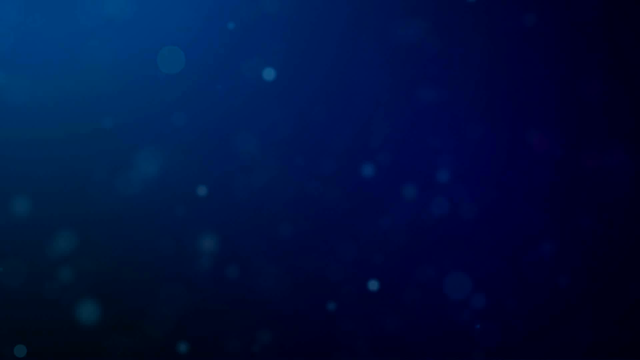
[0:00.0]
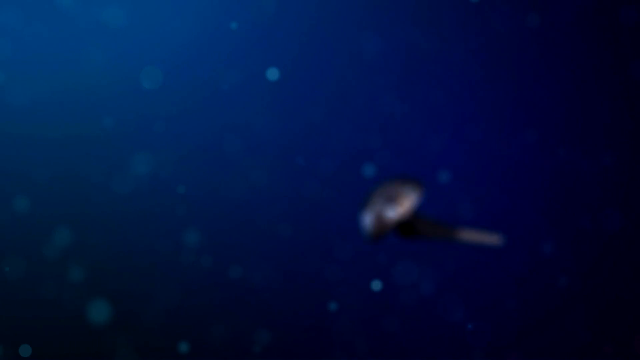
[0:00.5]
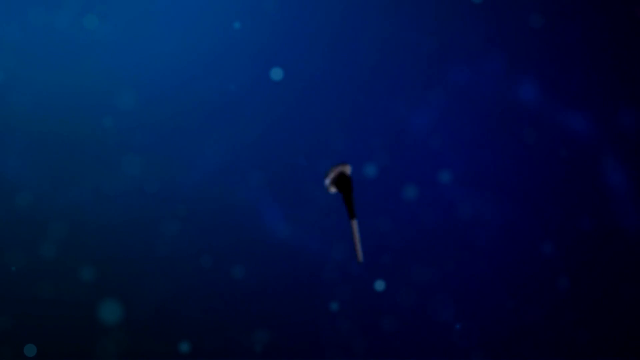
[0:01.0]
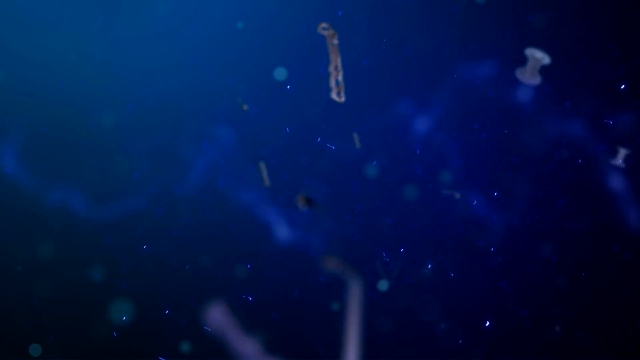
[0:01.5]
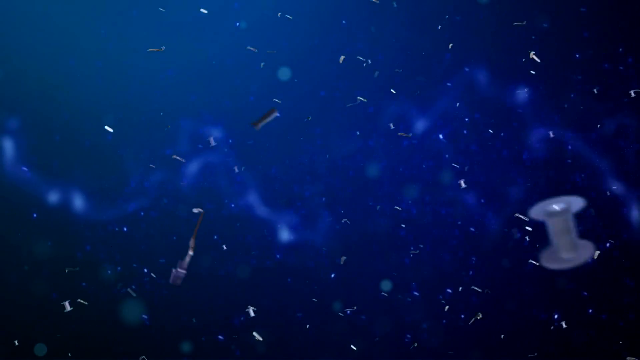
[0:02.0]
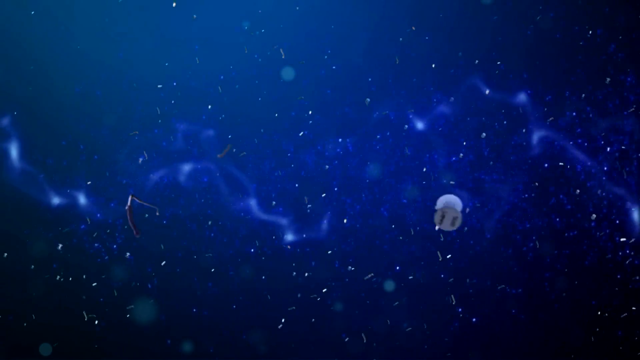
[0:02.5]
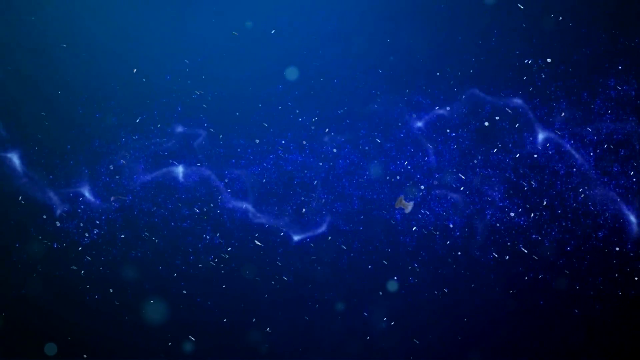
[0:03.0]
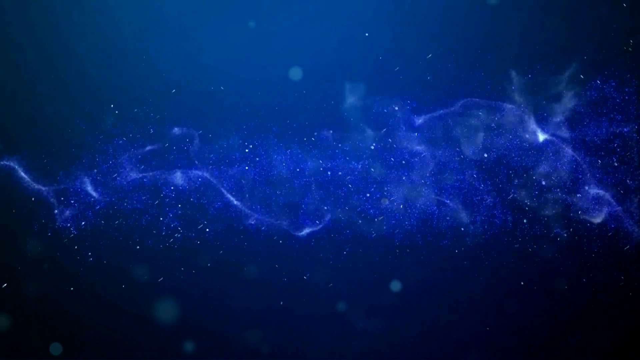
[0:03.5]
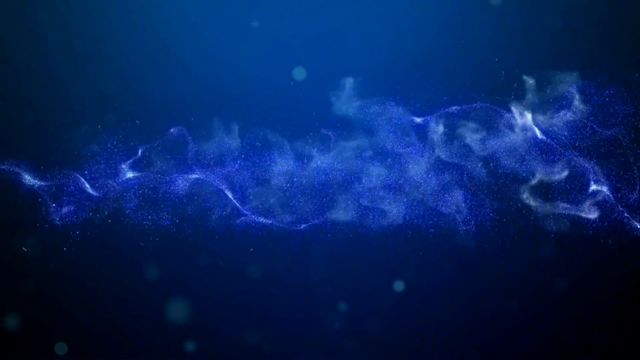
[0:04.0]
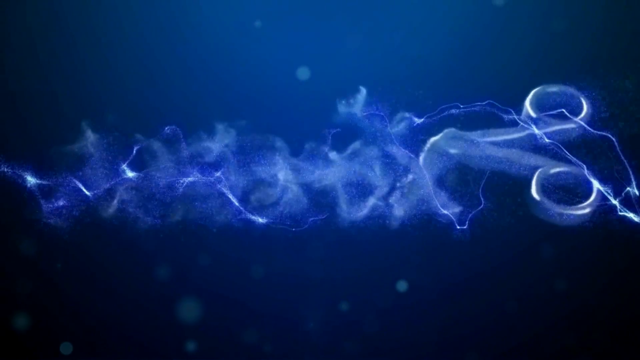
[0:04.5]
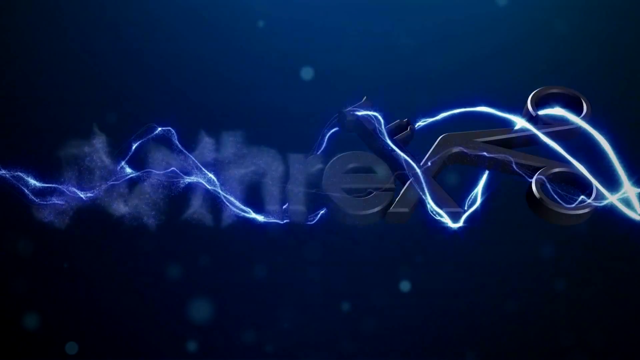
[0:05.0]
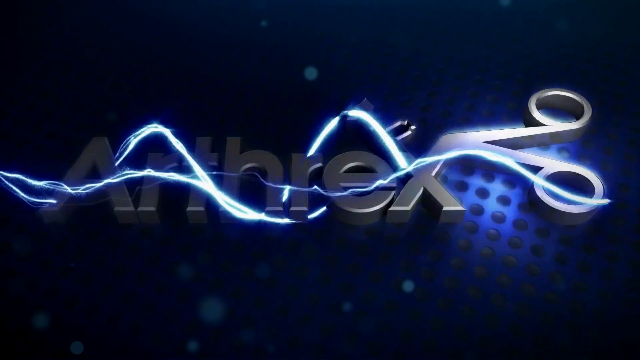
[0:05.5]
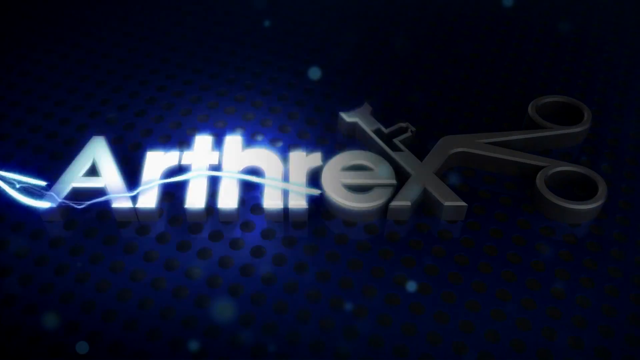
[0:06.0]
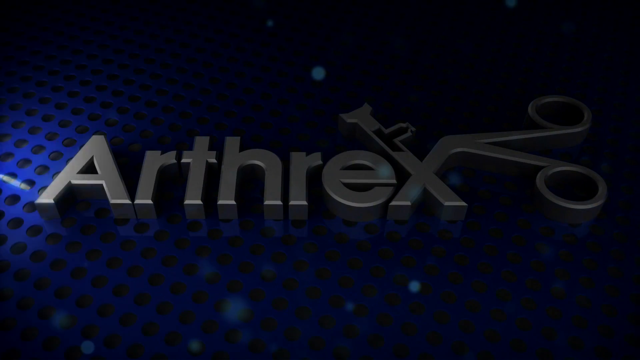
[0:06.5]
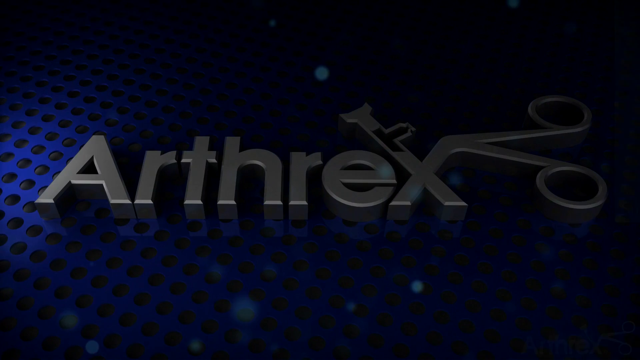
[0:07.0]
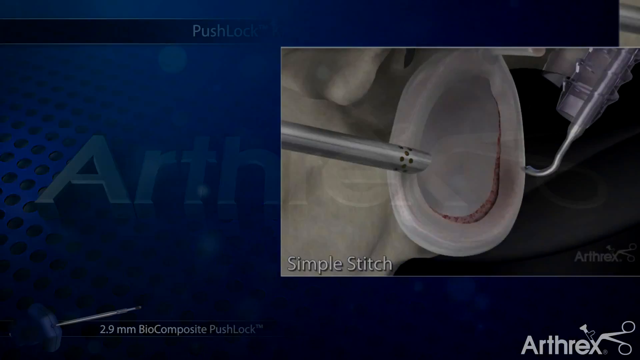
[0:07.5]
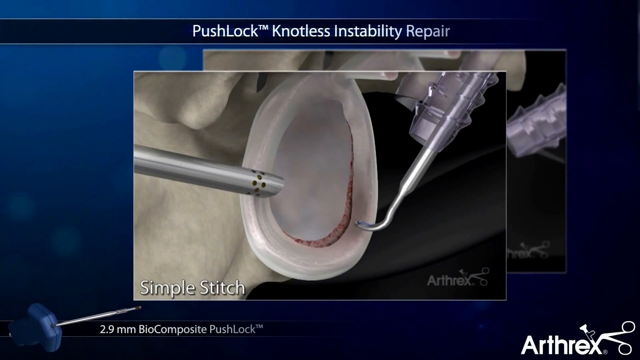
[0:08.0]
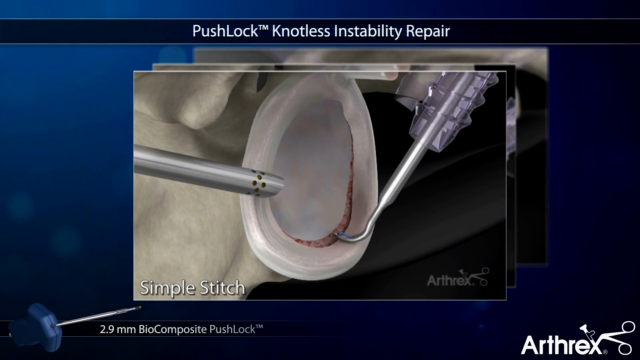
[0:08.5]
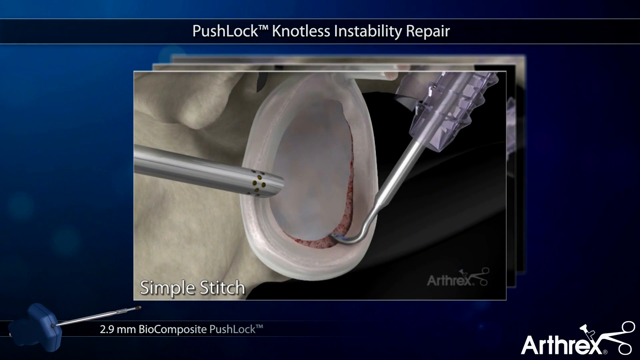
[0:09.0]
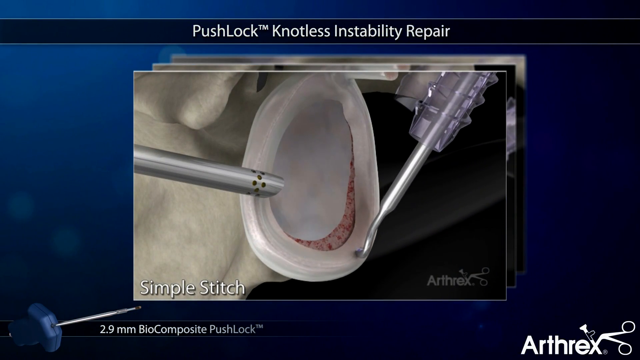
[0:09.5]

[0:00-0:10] An animation for Arthrex opens on a dark background. A bunch of very small dots form into a kind of DNA double helix, then disperse to reveal the word "Arthrex." Next, two hands appear, each holding an implement or some kind of poker, pulling apart what looks like a silicone, ear-shaped object. The video cuts at that point, so the object cannot really be seen clearly; it is some type of animation showing someone handling something silicone.